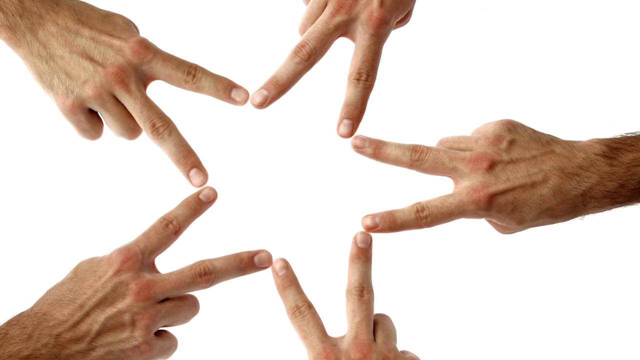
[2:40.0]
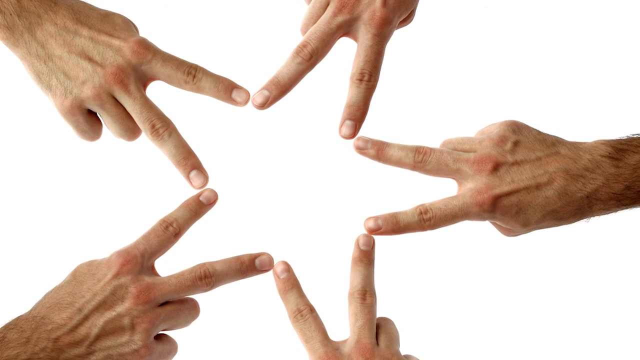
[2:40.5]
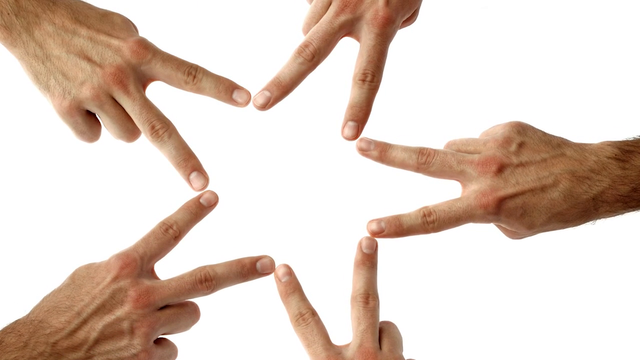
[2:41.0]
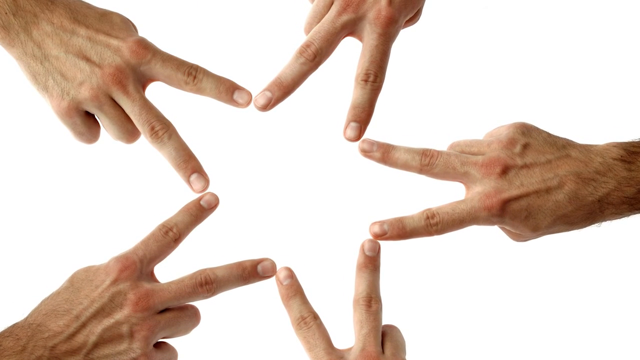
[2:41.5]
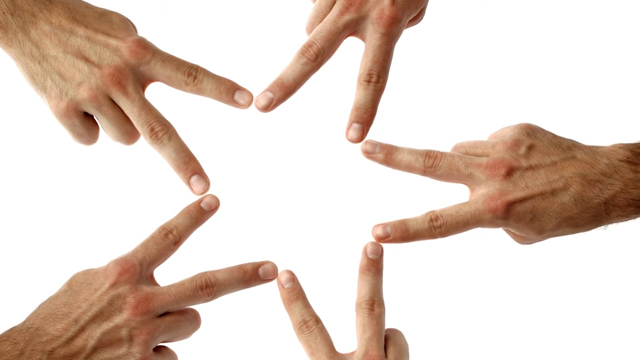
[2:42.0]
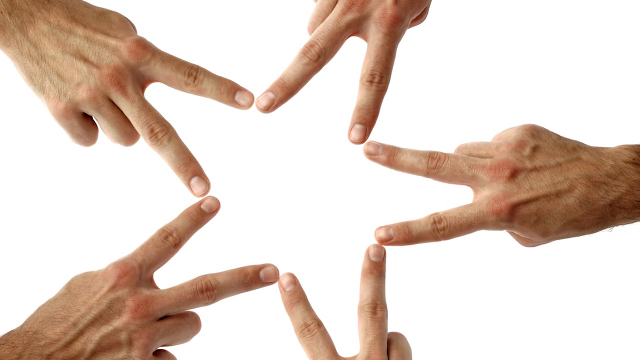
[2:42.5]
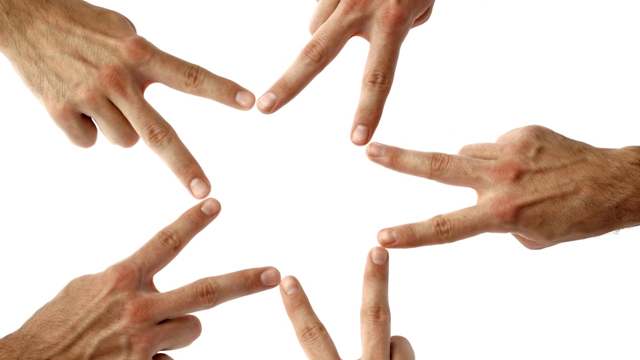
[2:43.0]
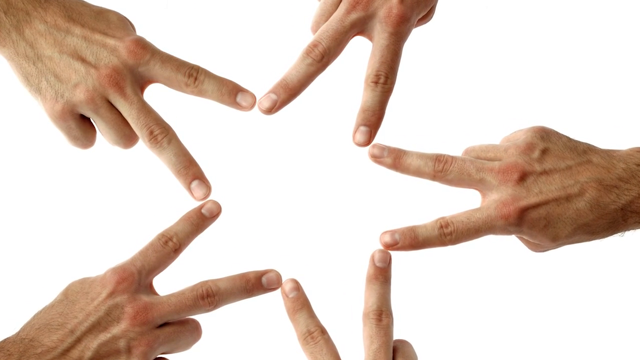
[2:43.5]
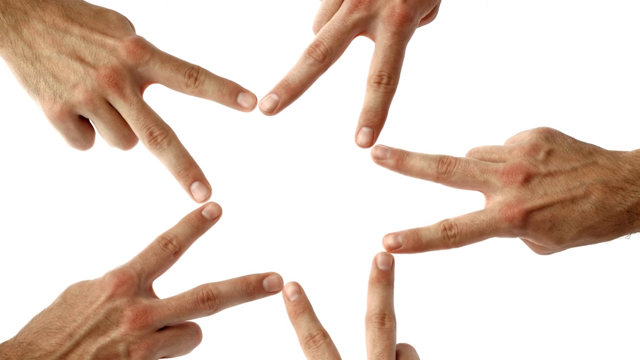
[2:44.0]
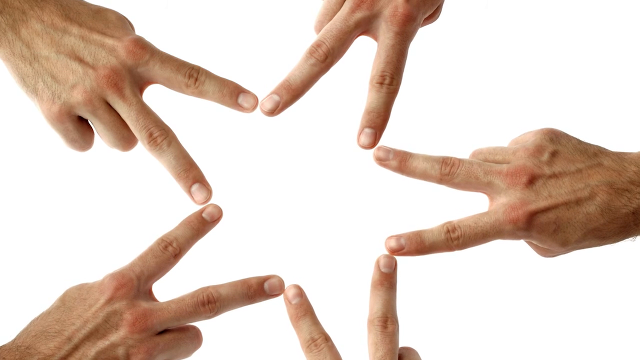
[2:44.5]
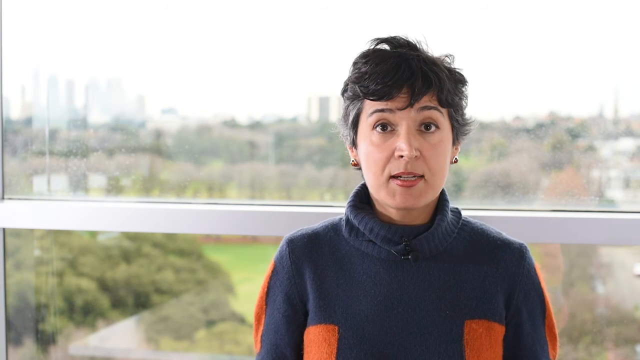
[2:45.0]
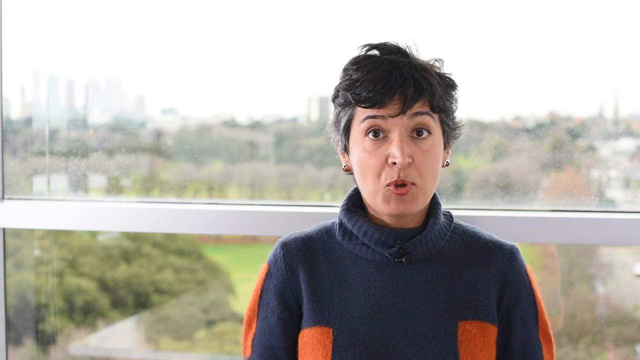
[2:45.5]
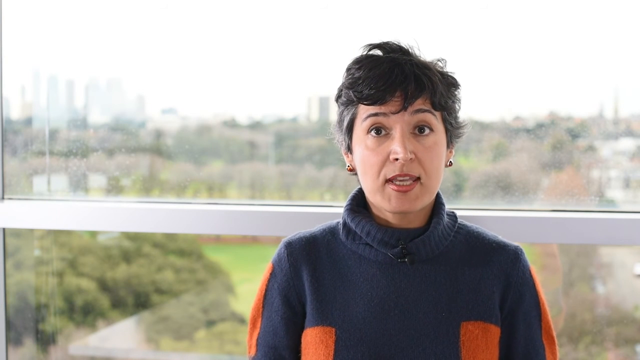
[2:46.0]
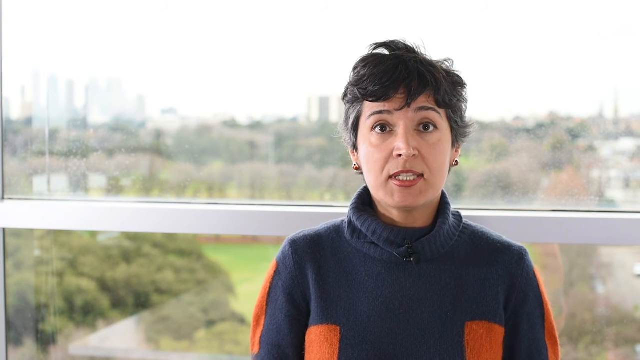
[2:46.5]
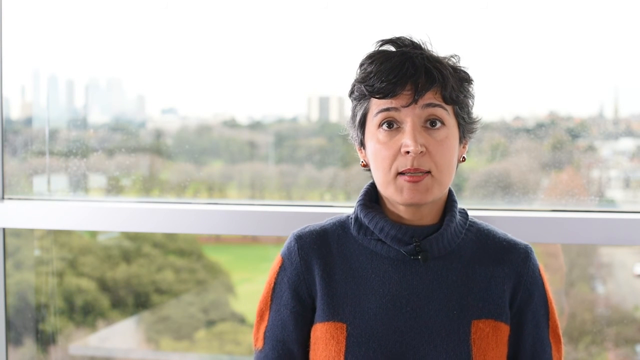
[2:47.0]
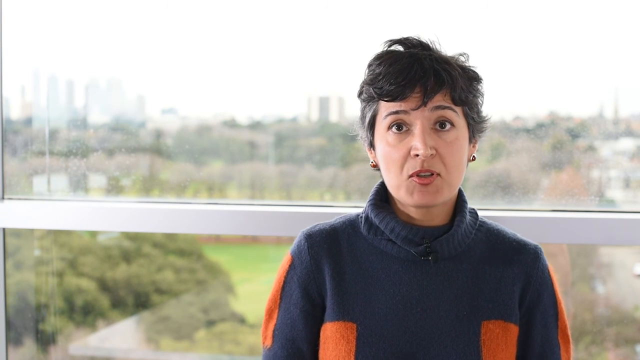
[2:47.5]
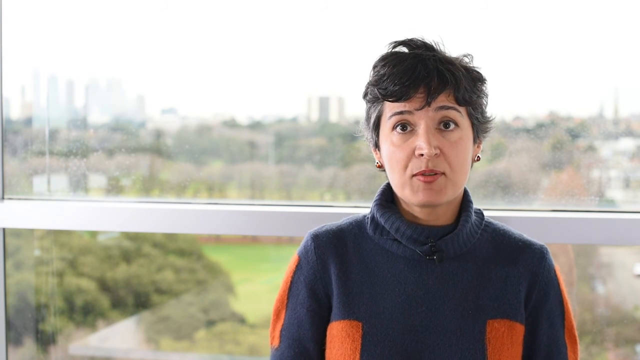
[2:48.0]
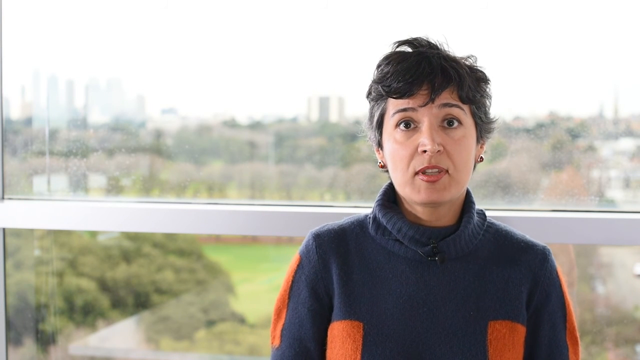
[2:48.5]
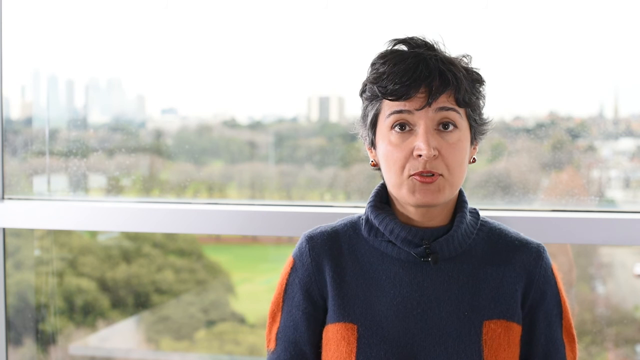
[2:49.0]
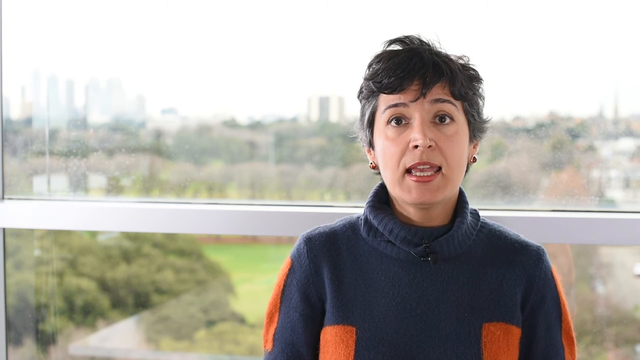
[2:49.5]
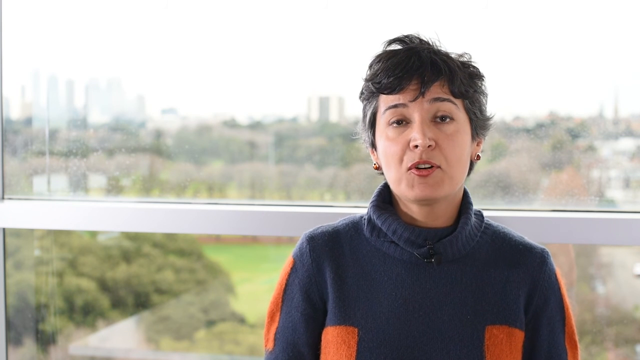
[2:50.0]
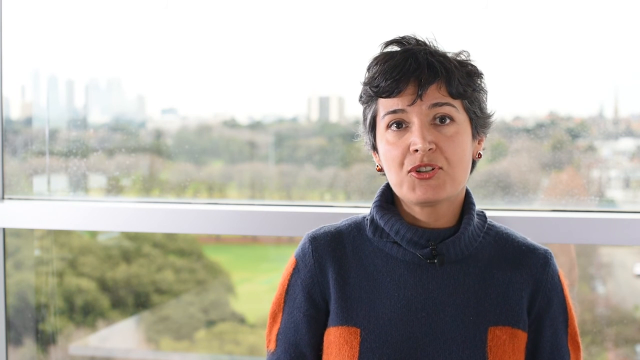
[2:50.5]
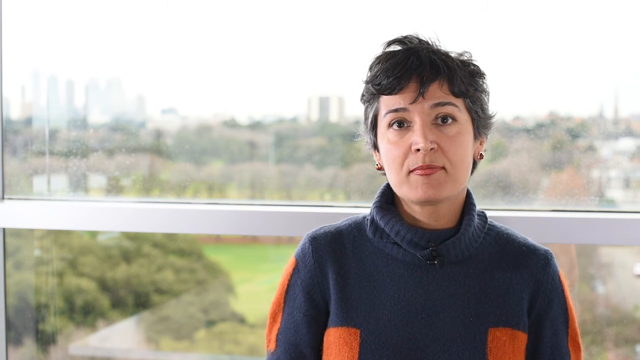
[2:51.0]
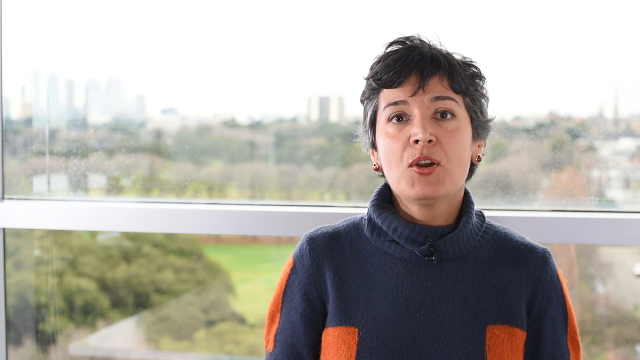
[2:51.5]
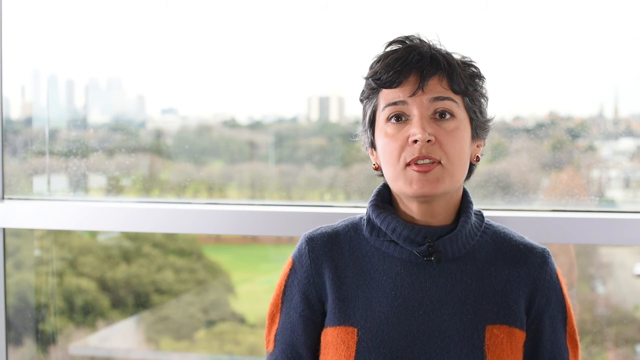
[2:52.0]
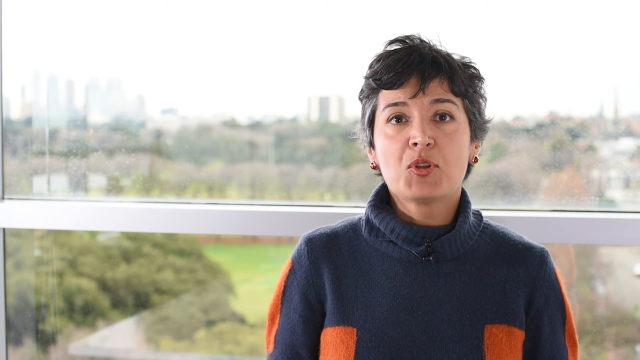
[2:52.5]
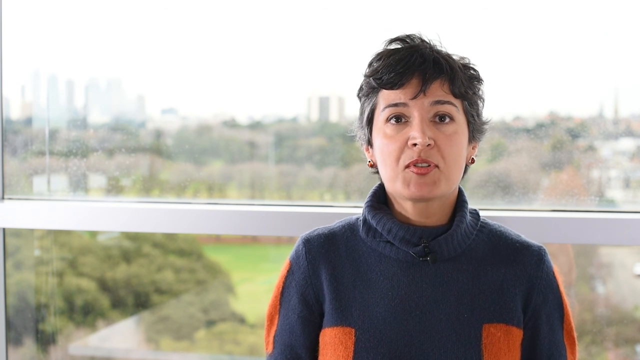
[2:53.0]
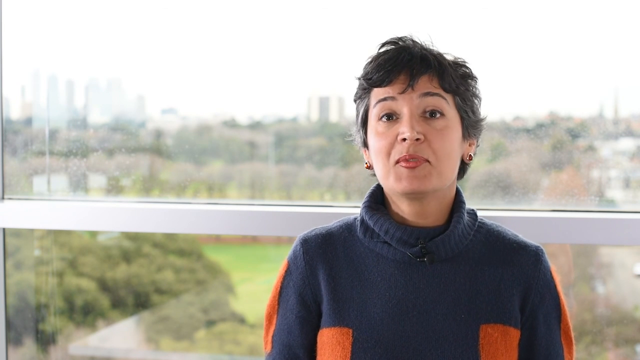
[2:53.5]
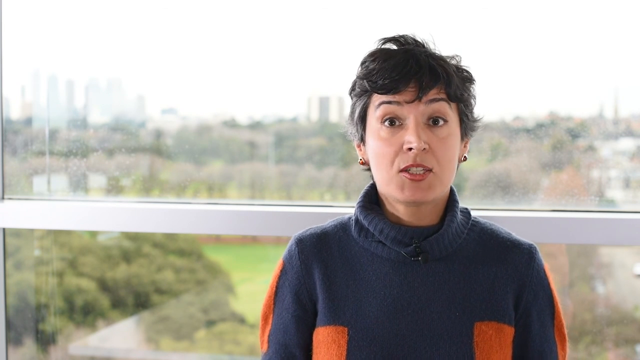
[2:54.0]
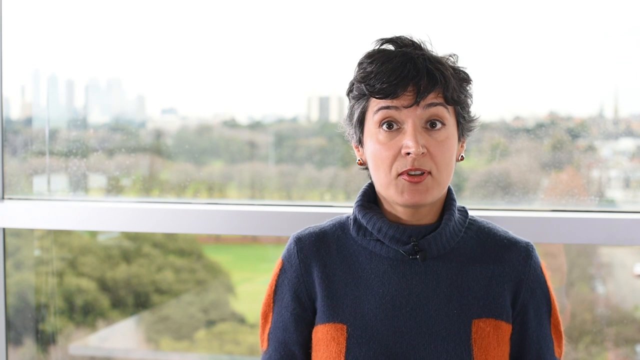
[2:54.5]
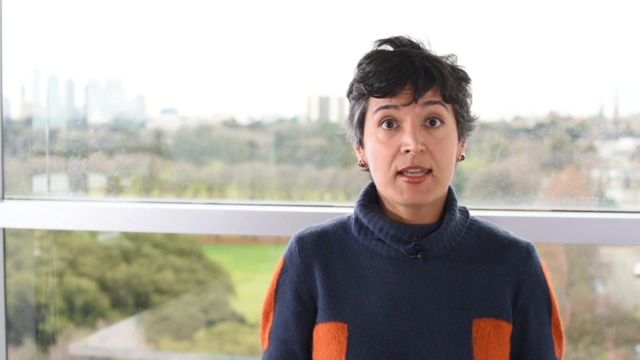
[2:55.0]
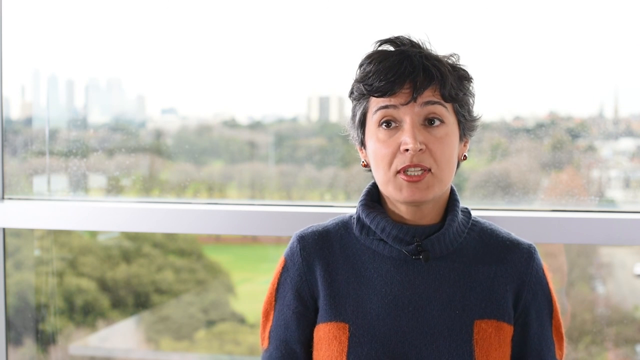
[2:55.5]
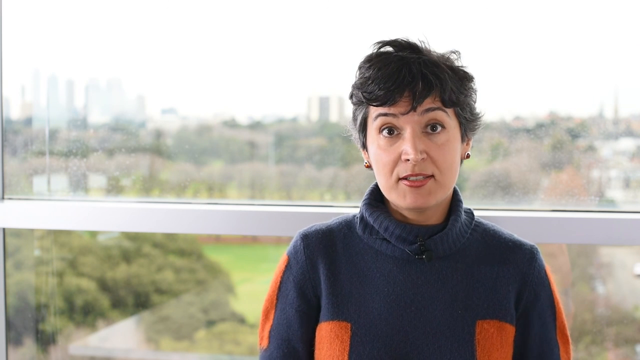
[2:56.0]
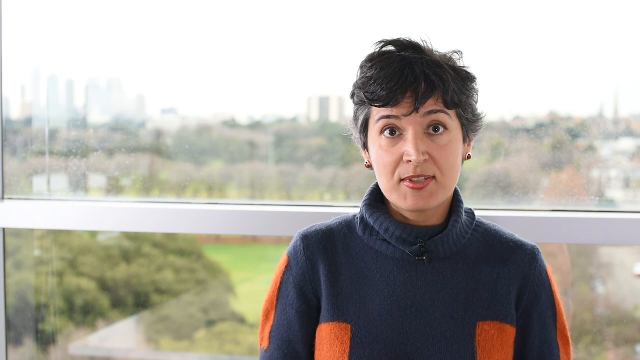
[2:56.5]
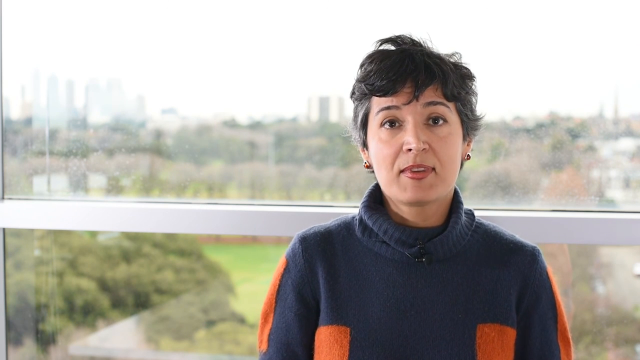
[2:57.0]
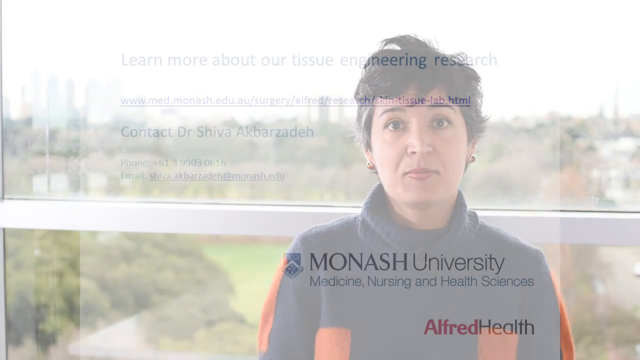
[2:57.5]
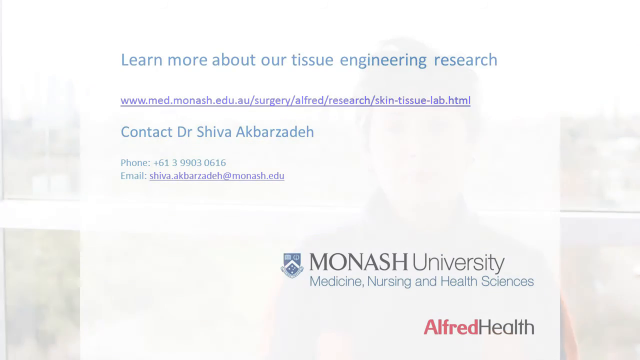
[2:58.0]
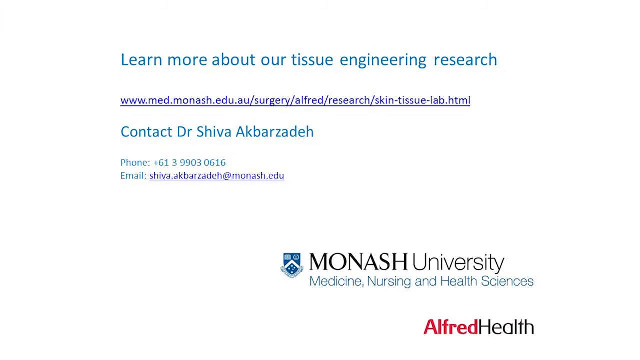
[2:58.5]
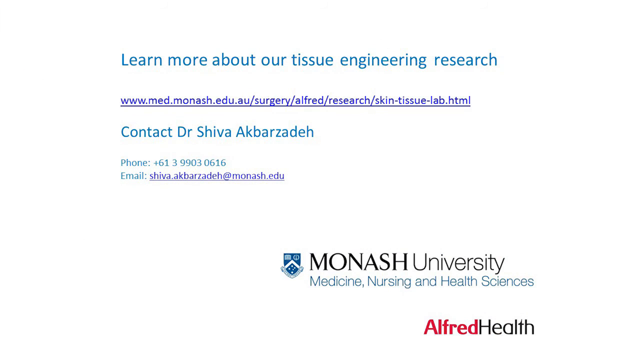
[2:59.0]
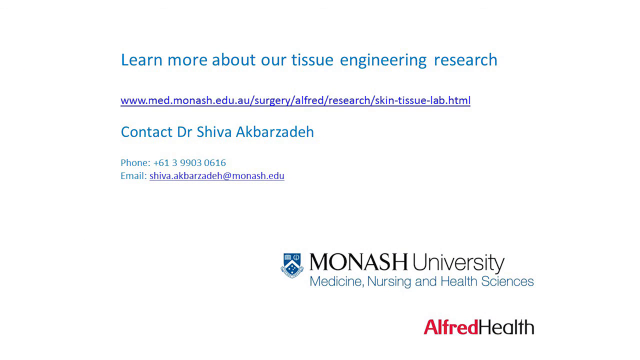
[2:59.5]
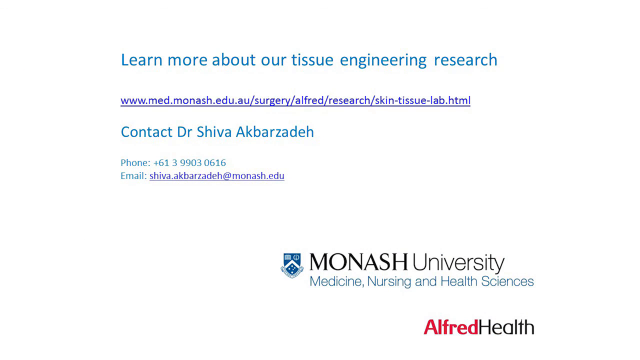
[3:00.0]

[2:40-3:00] Several hands appear on the screen, each with the pointer and middle fingers held apart to almost make the letter B. Five people put their hands together to make a star shape. Someone zooms into the star, showing a closer view of the fingers. The video cuts to a woman surgeon talking on the right side of the screen; she has short black hair and wears a sweater. Then, very quickly, the video cuts to a page that says "learn more about our tissue engineering research" and shows a web address beginning "www.med.manasch.edu.au/surgery/alfred/research/", followed by "contact dr. Shiva Albert Ades", a phone number, an email address, and "Manasch University medicine nursing and health sciences".